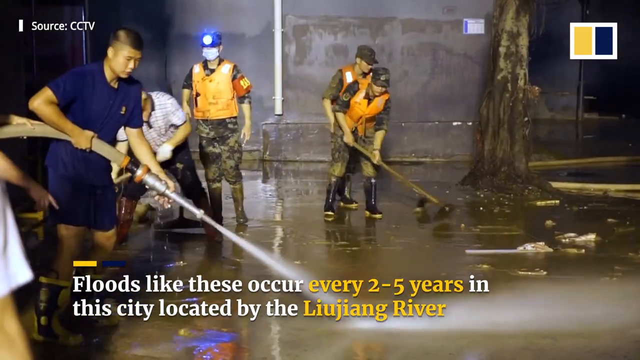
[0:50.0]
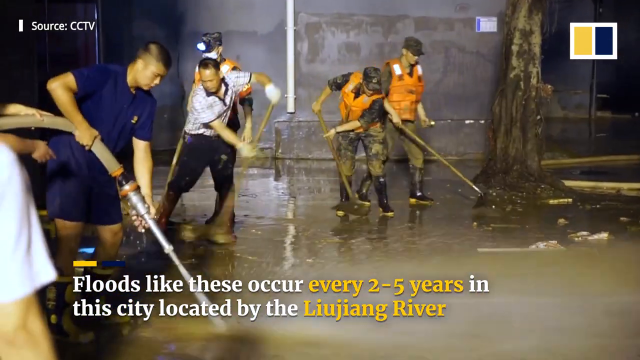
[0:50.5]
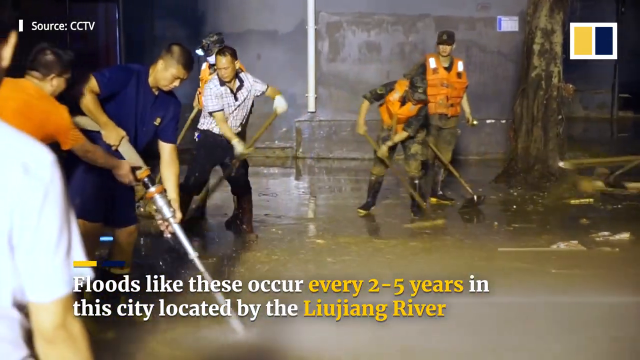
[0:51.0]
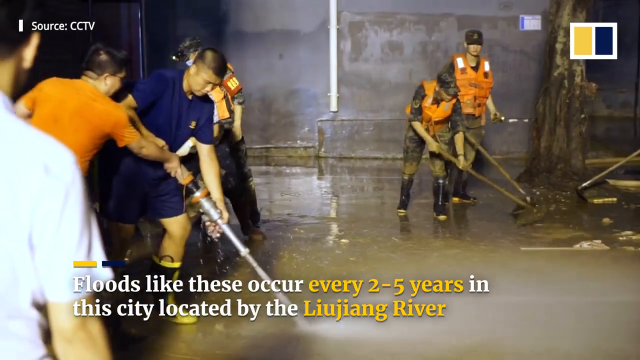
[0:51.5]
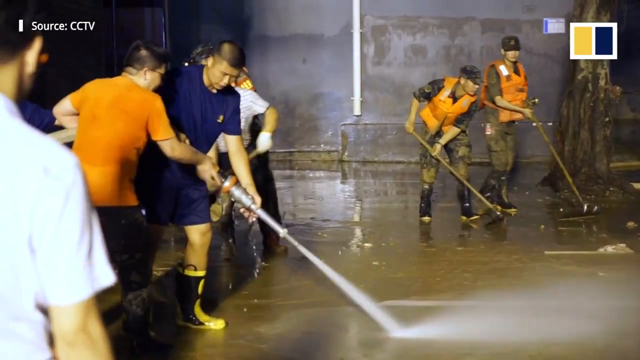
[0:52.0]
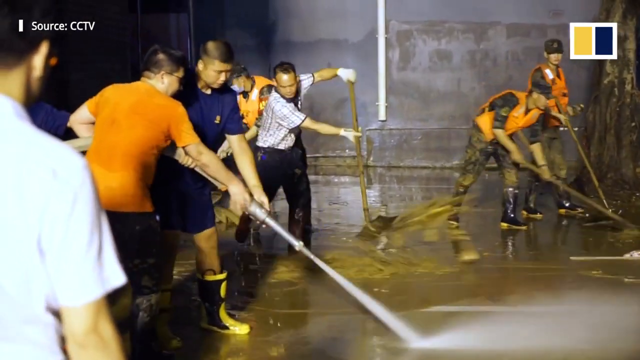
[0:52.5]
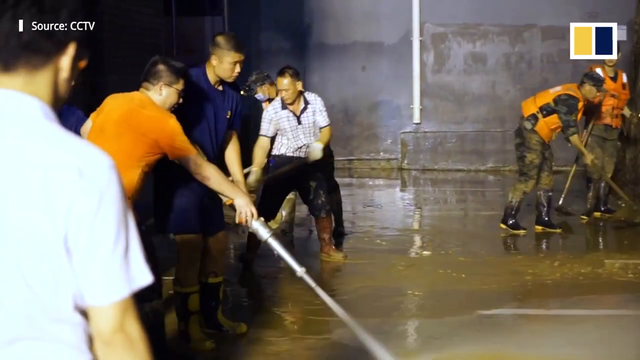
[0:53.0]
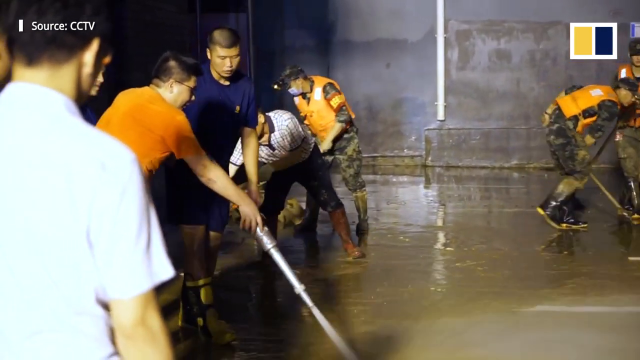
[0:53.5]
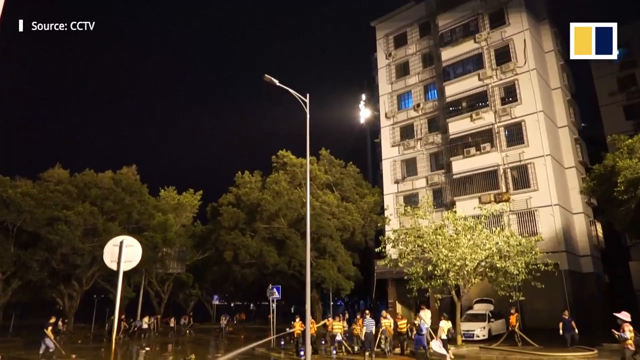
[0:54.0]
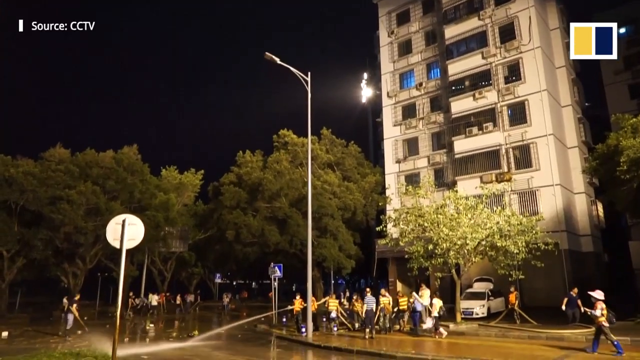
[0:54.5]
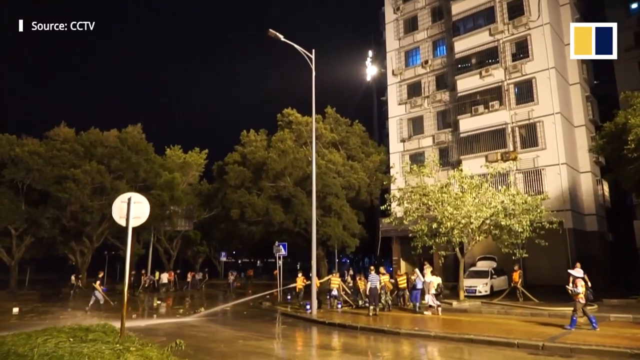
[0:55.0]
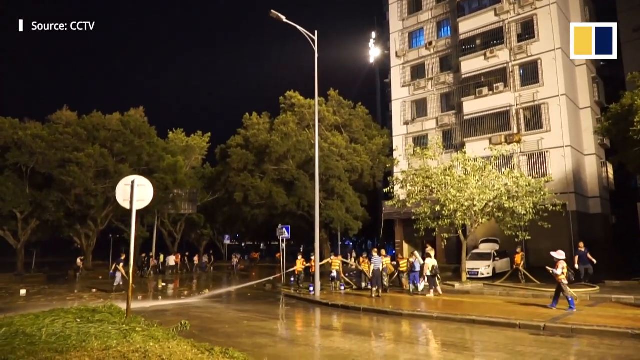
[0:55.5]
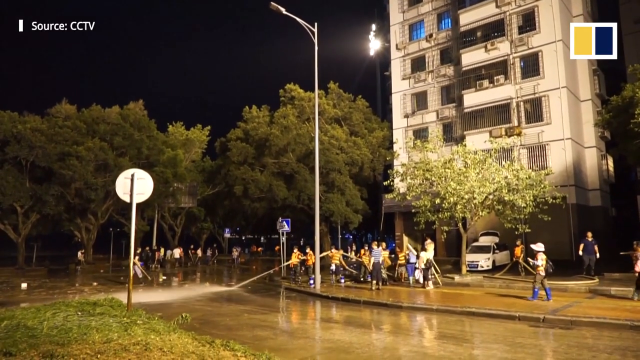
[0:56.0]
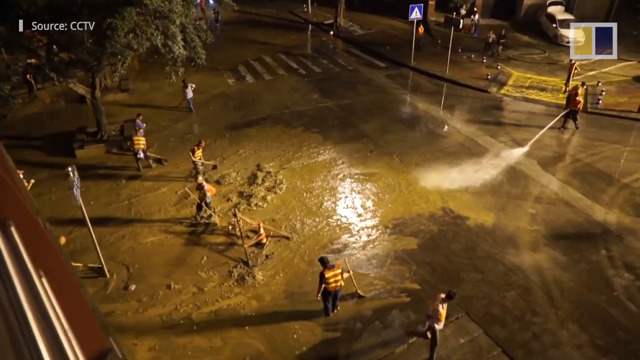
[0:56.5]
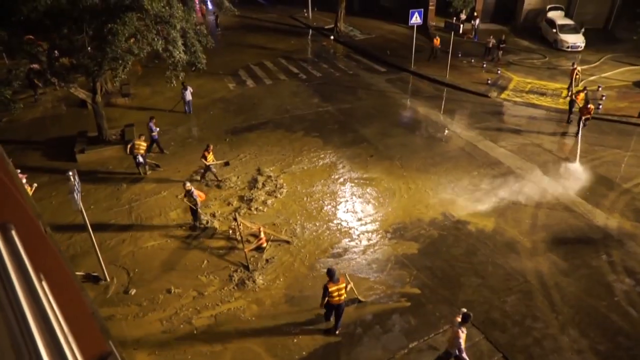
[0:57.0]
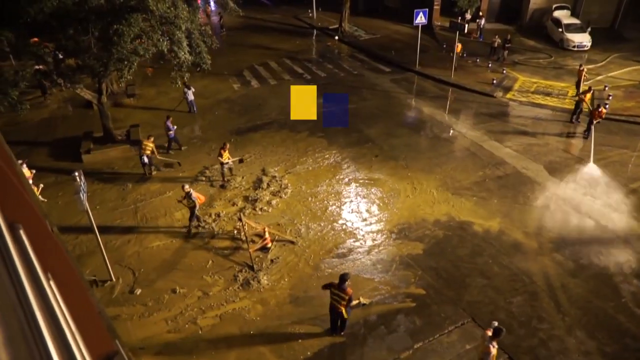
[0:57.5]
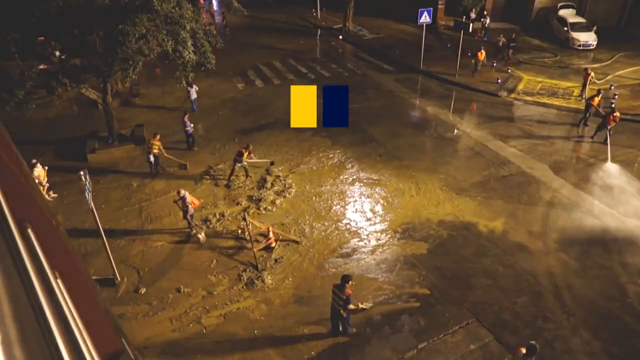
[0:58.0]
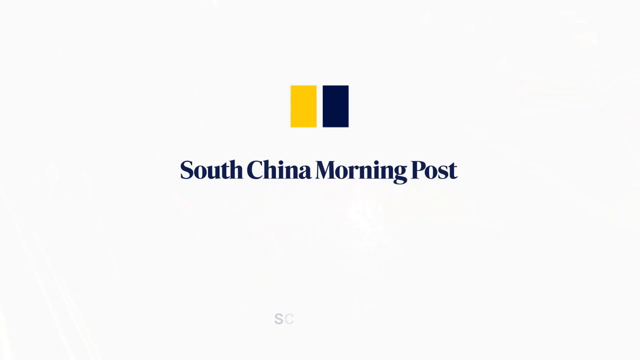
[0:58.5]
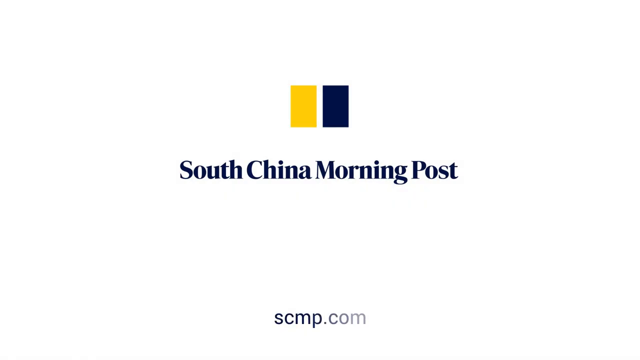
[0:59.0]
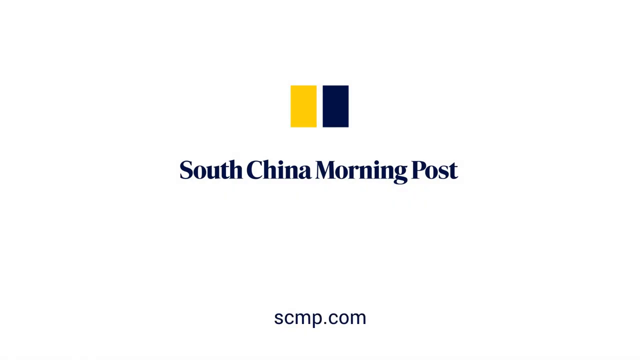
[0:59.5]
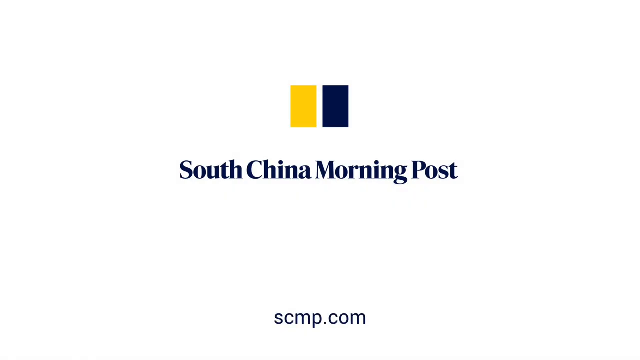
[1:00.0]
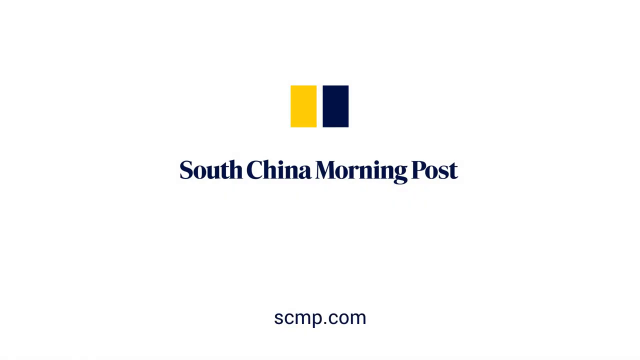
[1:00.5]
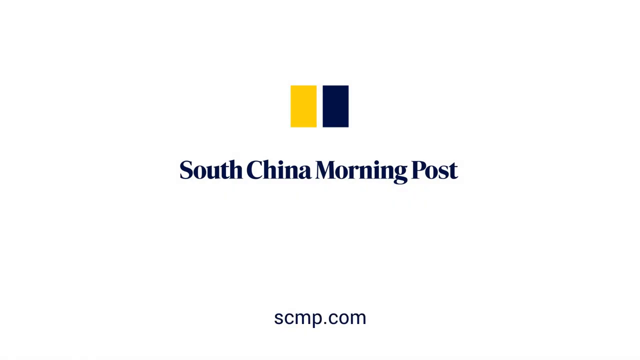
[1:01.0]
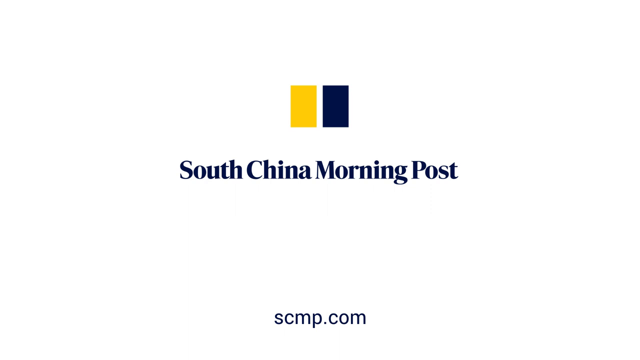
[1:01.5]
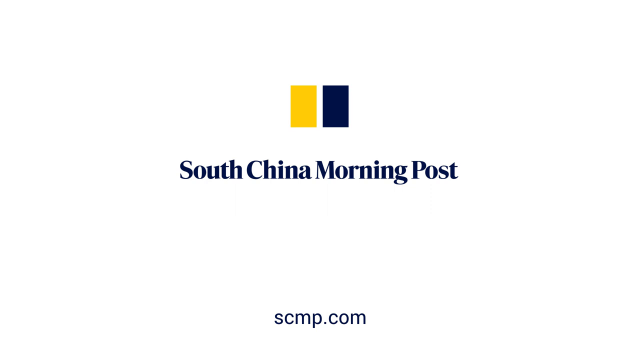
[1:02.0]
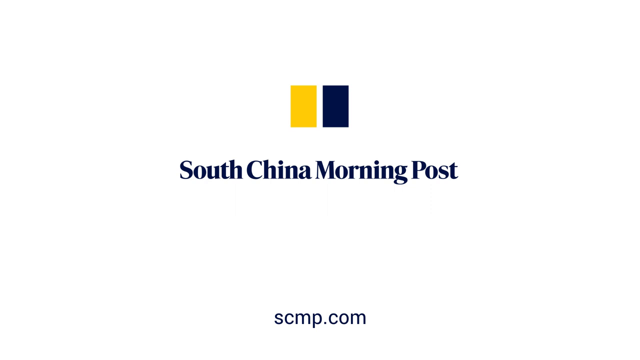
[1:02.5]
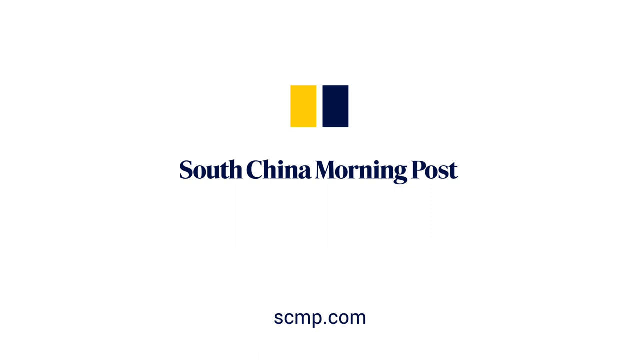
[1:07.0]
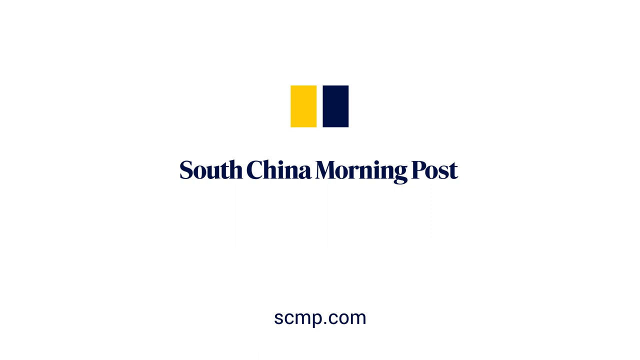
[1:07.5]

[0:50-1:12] Various shots, some taken from far away and some close up, show people at night hosing down and raking the mud. A far-away shot of the people cleaning up is followed by an aerial shot of the cleanup, with someone hosing on the right side. Workers rake the mud around the sludge, which is very wet and muddy. Some look like official workers and some look like civilians. At the end, the video switches to an all-white background with a graphic: the text "South China Morning Post" in navy blue, with the first letter of each word capitalized and the rest lowercase. Above the text are a yellow upright rectangle and a dark blue upright rectangle, and "scmp.com" appears at the bottom.